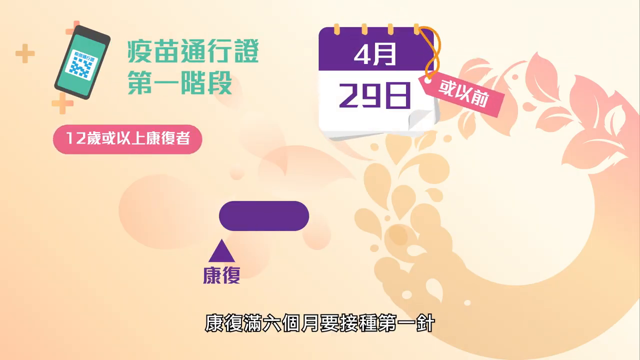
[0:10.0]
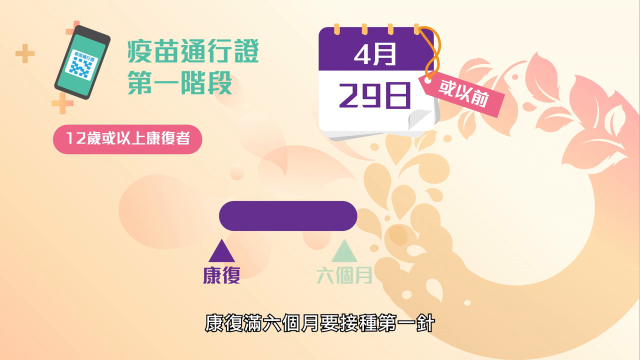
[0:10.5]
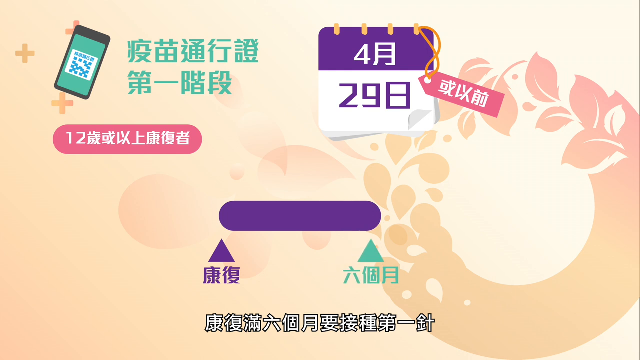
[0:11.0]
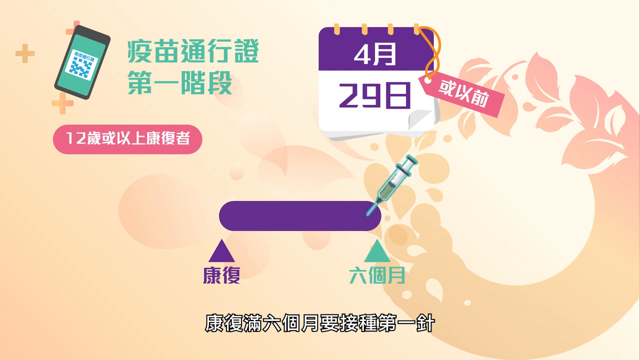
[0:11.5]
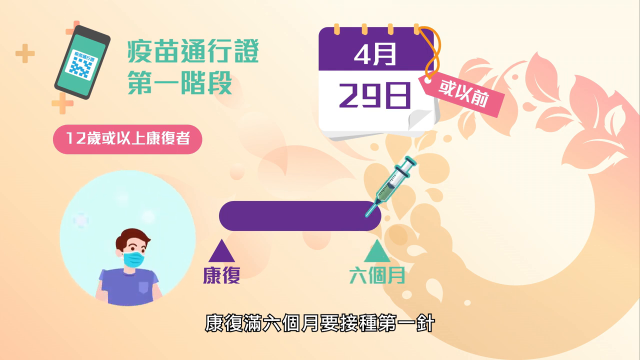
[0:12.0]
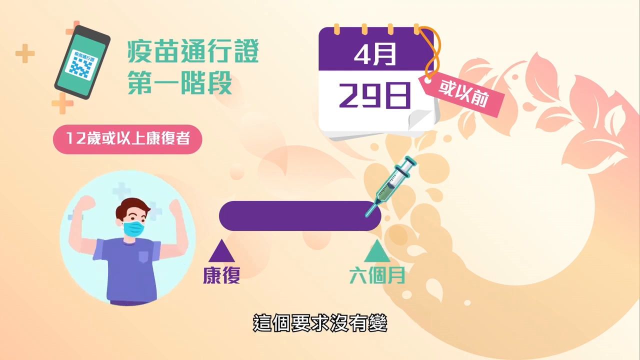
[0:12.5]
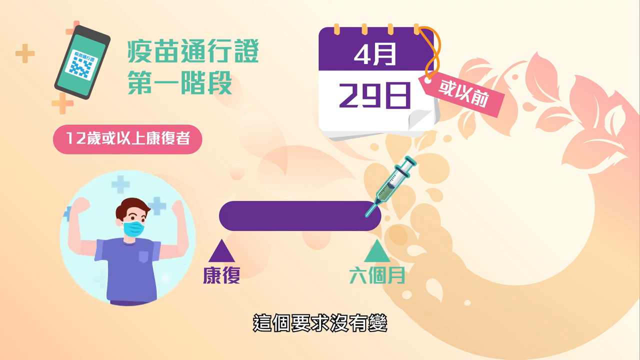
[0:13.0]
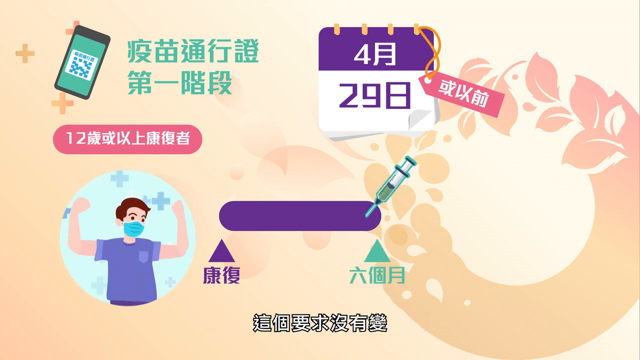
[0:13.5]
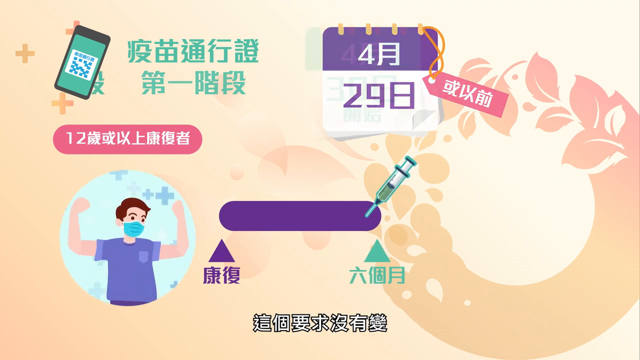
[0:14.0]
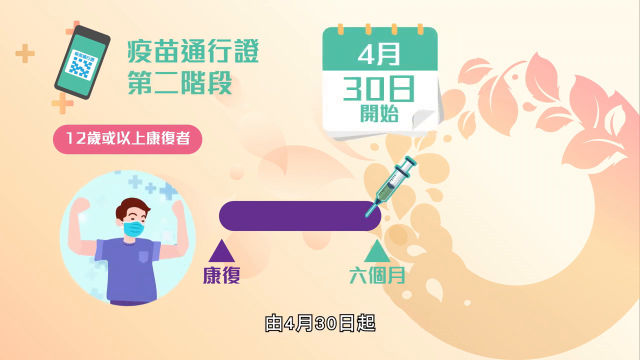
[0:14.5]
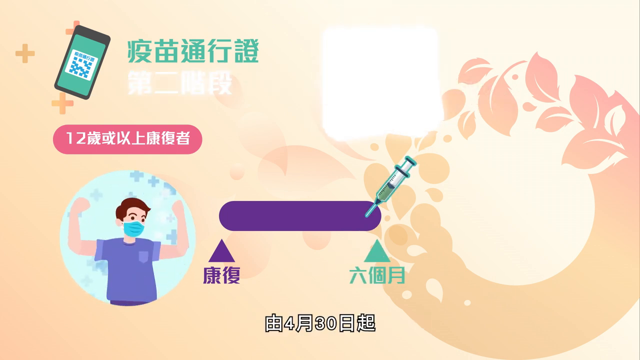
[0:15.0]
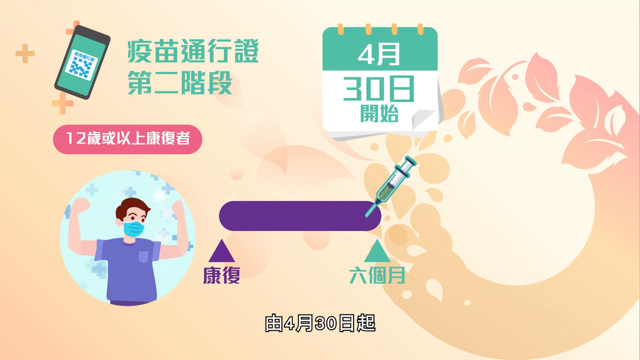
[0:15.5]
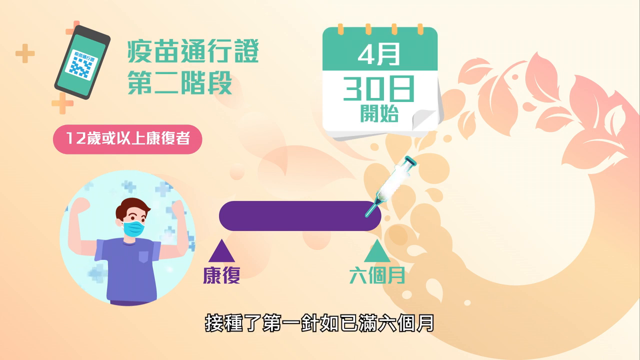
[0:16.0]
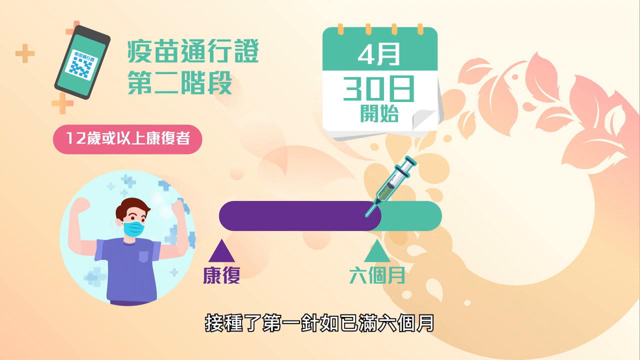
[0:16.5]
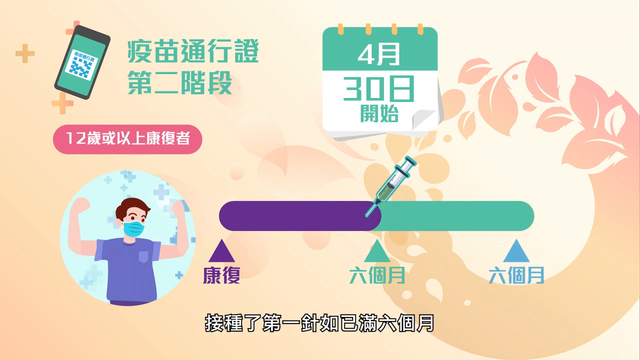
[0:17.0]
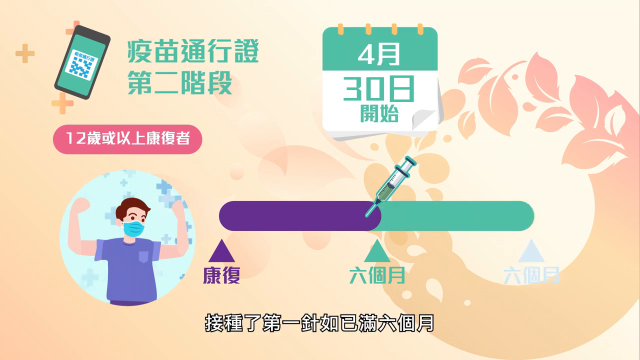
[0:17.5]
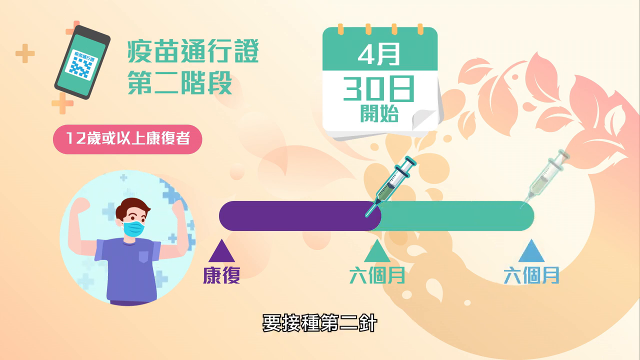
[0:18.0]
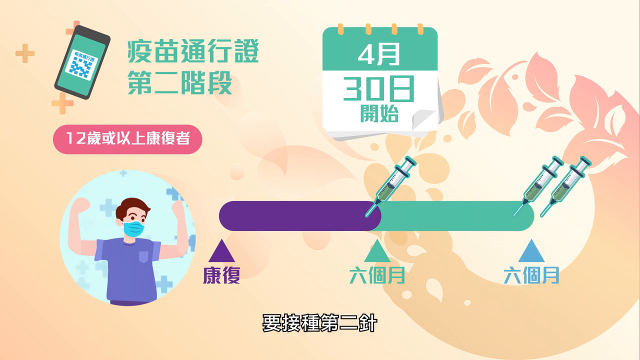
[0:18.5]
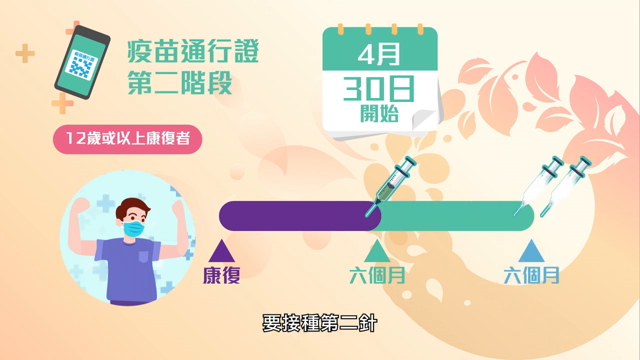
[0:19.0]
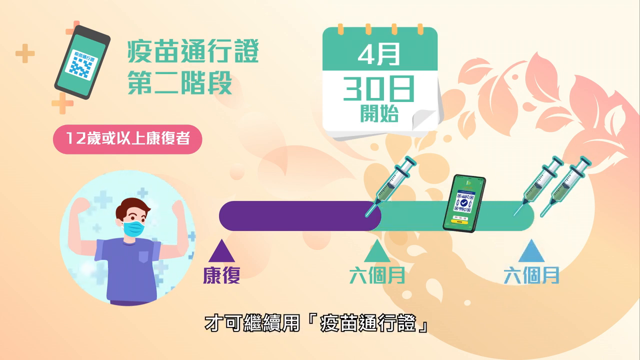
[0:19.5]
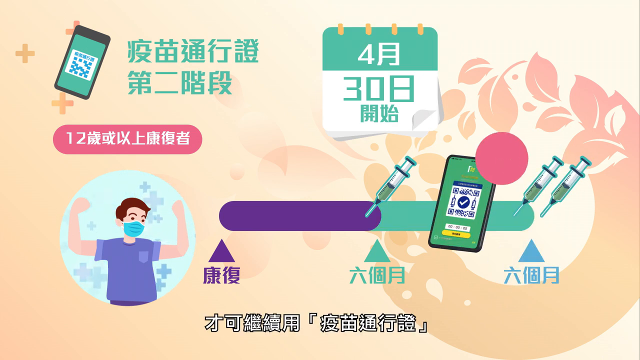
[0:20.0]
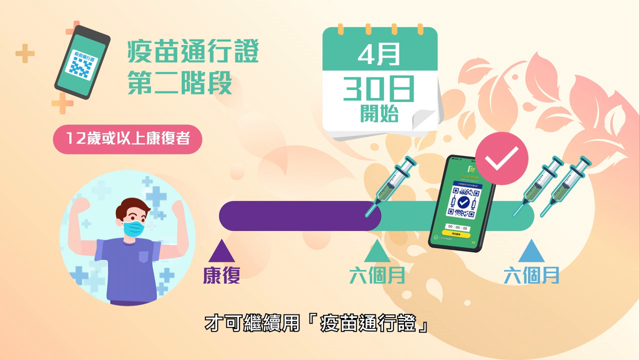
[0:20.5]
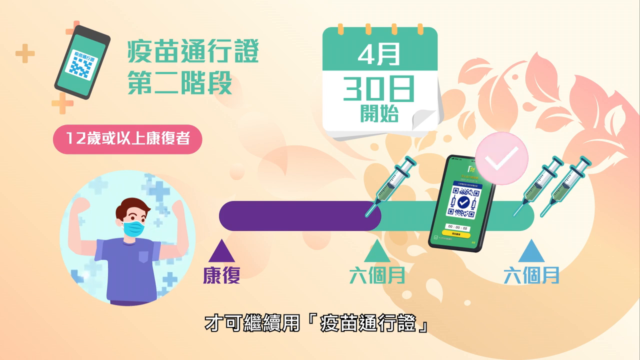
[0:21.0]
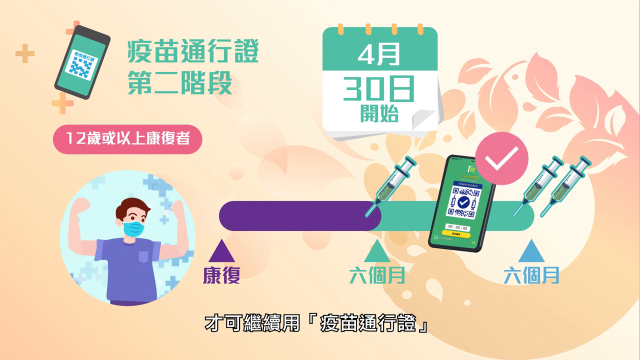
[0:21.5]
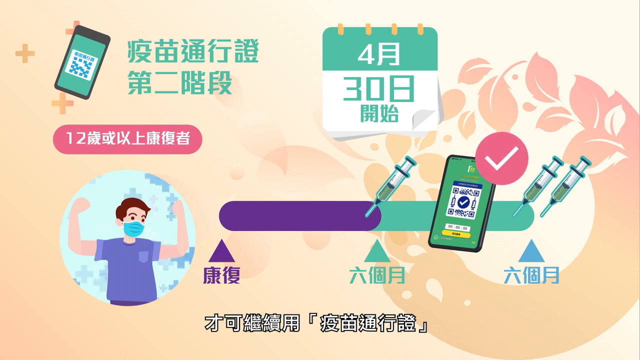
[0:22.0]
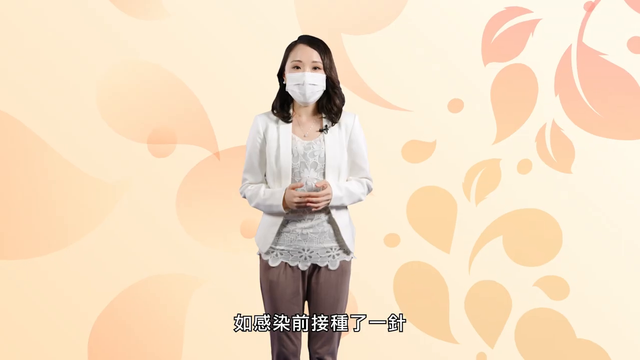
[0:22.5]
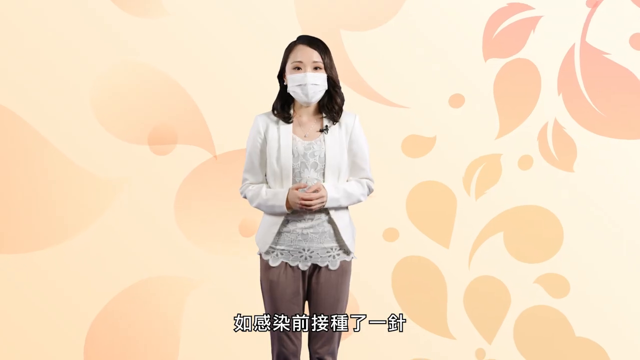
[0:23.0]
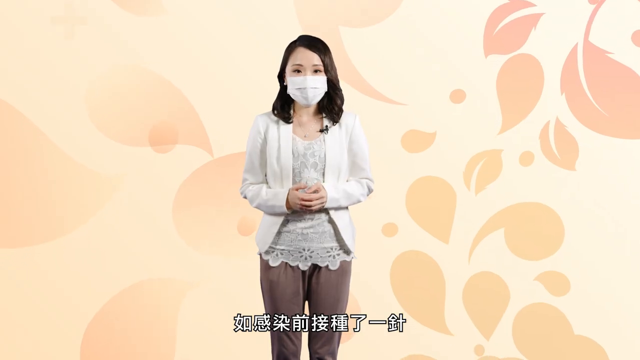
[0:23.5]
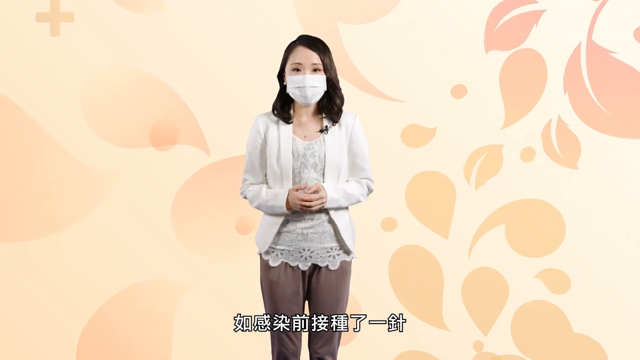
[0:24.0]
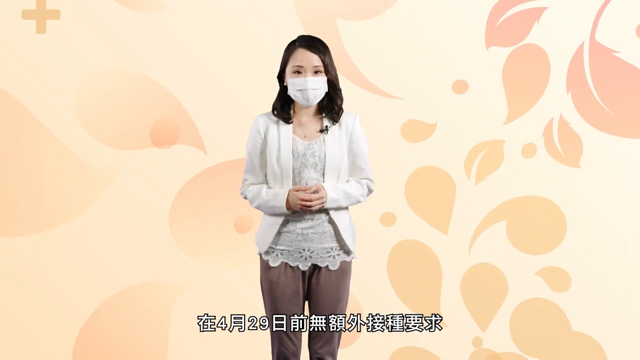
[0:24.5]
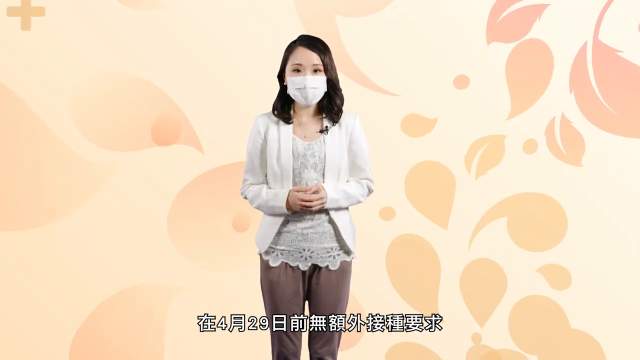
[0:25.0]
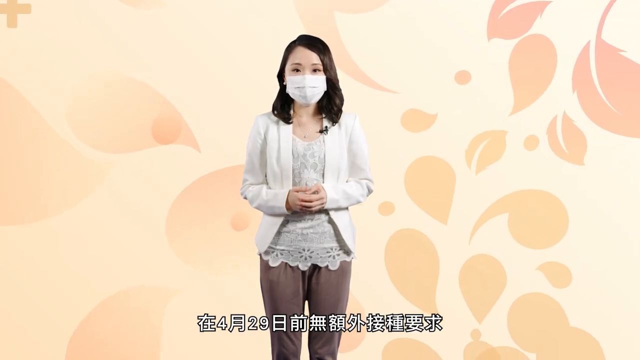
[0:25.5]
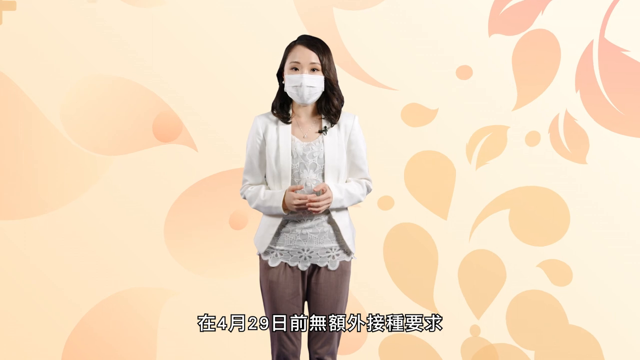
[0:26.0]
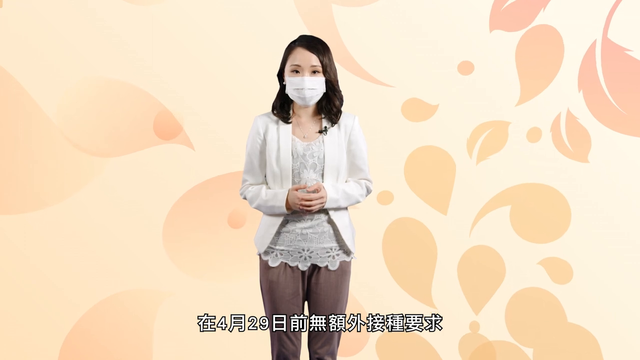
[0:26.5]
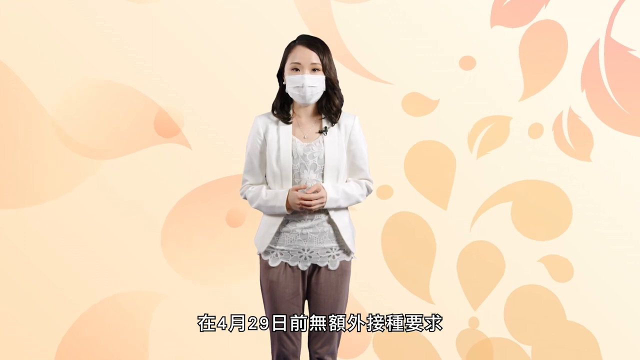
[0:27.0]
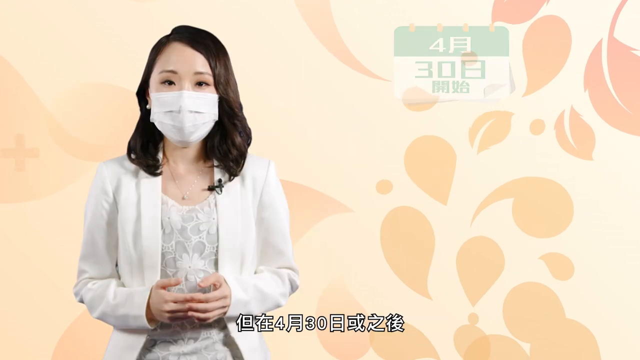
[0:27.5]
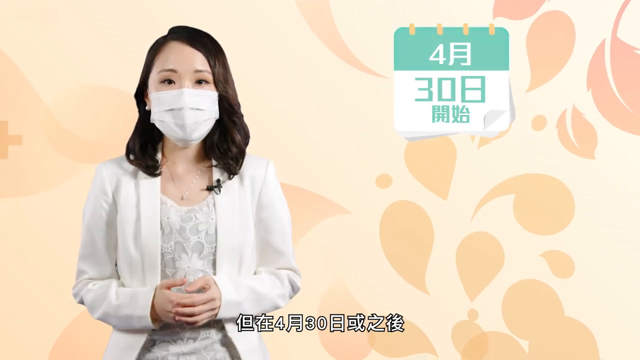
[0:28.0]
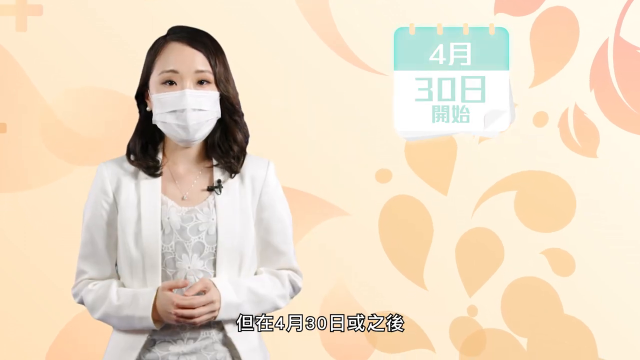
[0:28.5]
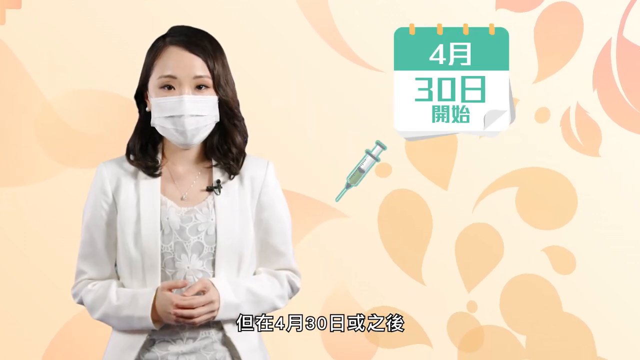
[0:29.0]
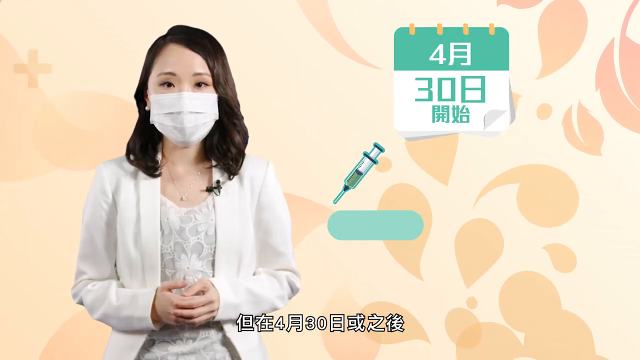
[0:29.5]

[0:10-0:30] Graphics continue on screen: a phone, a calendar, and kind of pink little text boxes. There is a purple, kind of rectangular circle with what looks like a green needle. A blue circle pops up showing someone raising their hands, like a caricature of a person wearing a mask. The calendar changes colors and numbers. The purple cylinder kind of gets elongated into a green cylinder, with triangles below it: a purple one, a green one, and a blue one. Two more needles appear, and some sort of device that looks like a phone is in the middle, where a pink check mark appears. The video returns to the presenter speaking with her hands held together, and a calendar appears alongside her on the left of the screen.